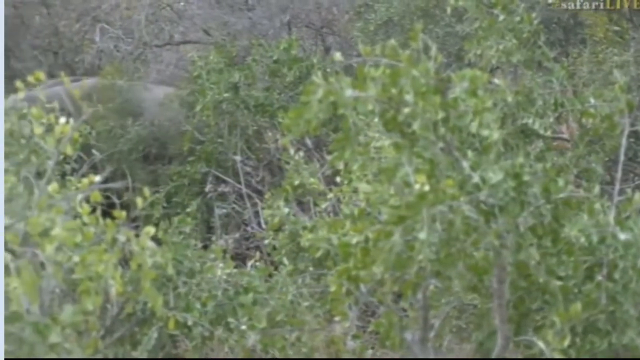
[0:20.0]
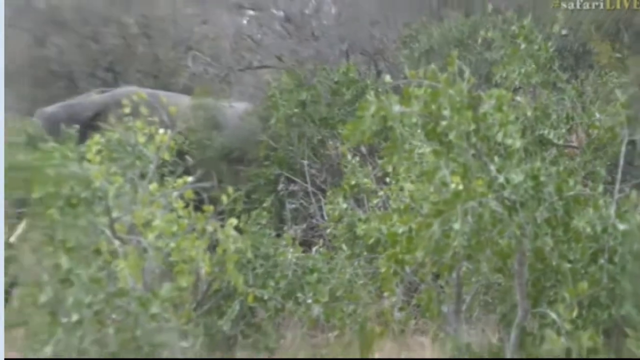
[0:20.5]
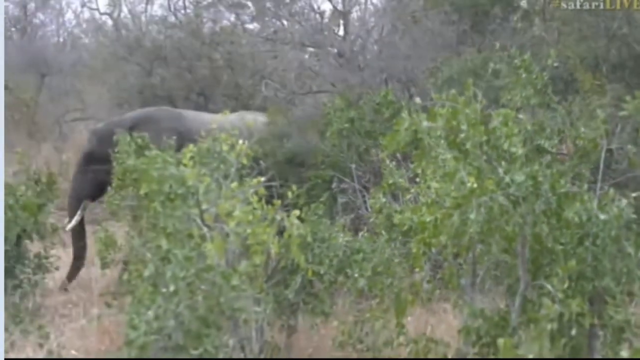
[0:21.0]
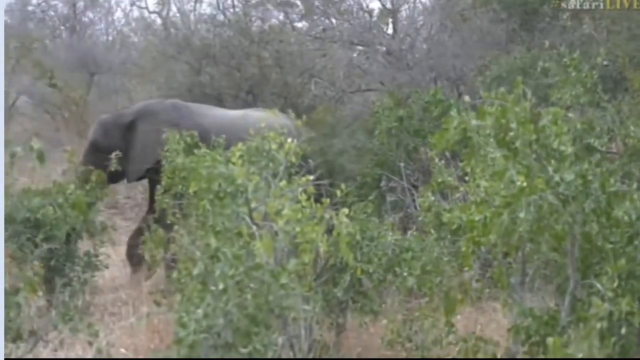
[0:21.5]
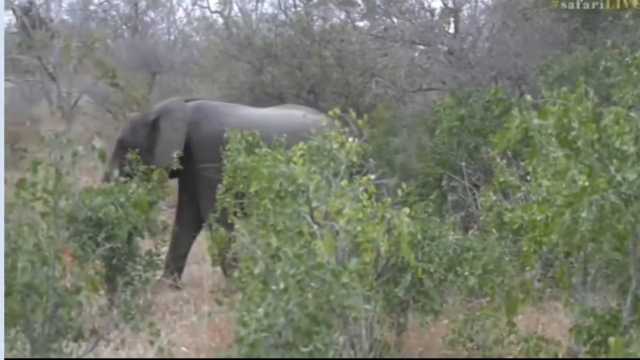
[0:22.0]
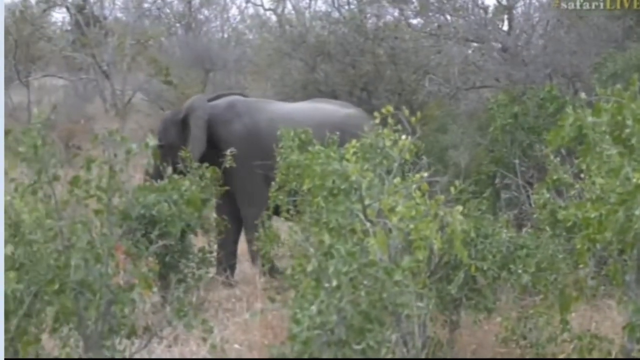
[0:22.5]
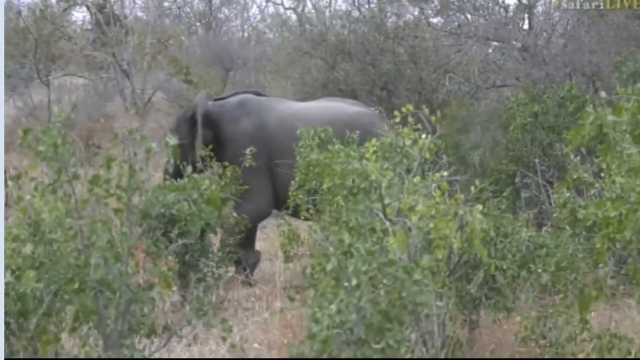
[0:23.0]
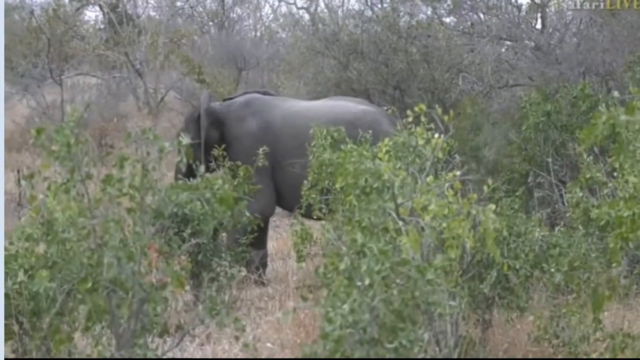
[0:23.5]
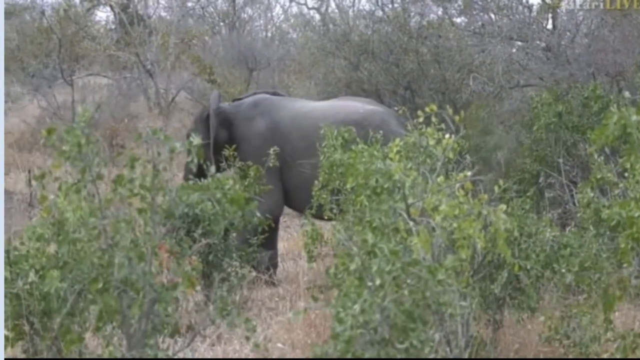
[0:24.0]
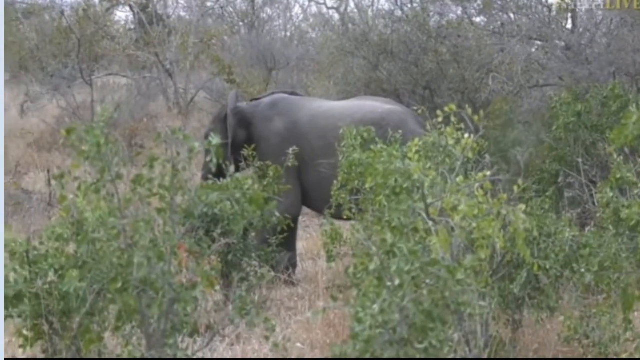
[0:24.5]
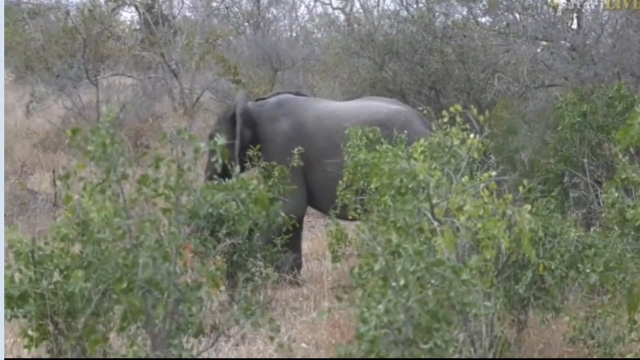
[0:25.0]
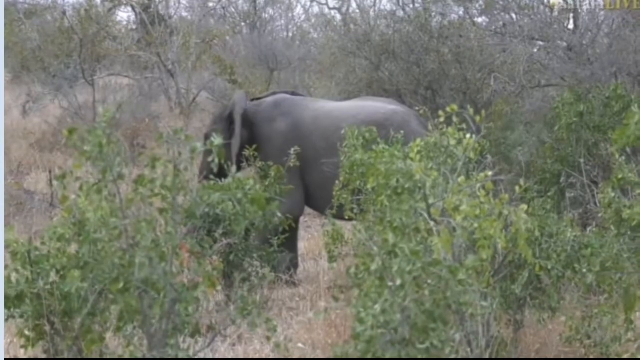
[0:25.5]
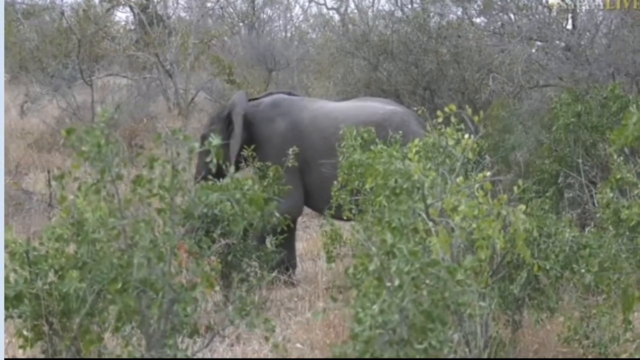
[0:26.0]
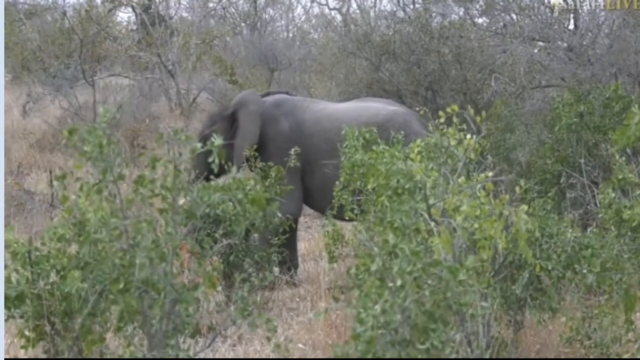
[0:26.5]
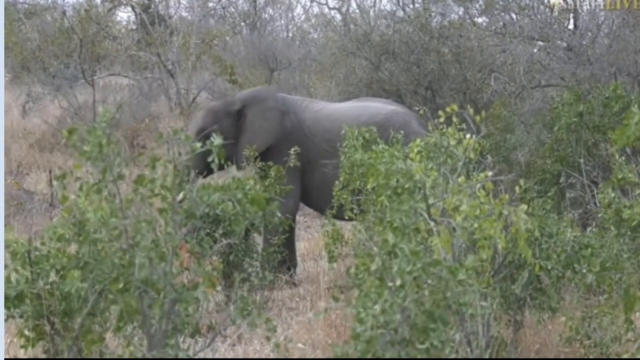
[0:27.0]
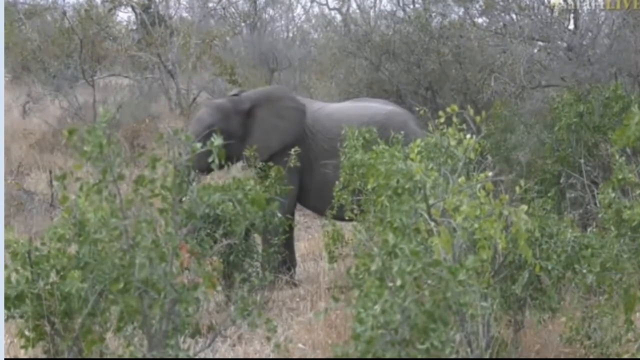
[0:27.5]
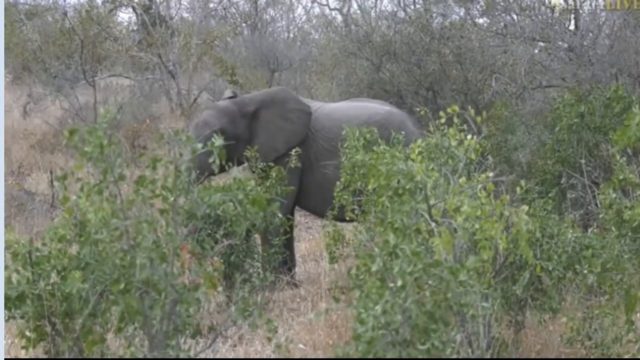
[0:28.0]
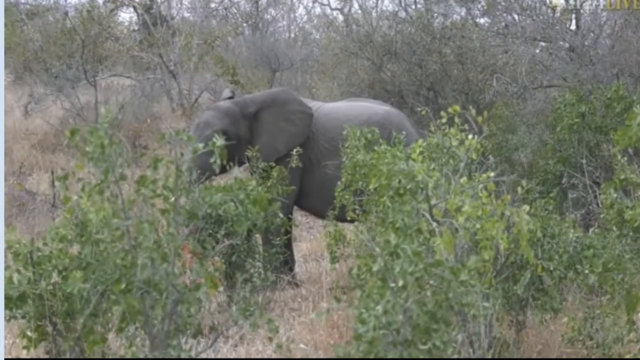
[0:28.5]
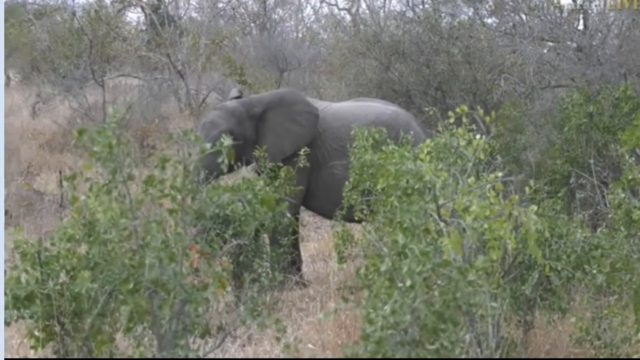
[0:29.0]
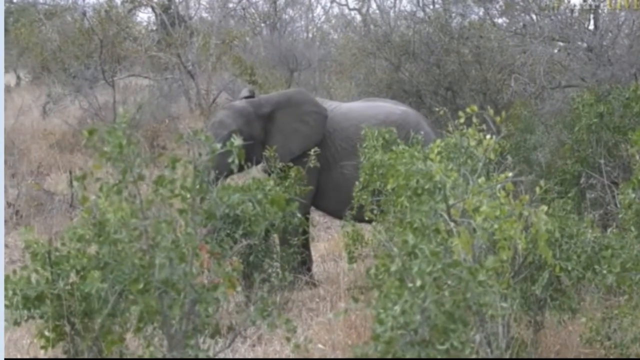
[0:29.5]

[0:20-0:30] A very big grey elephant appears behind the small green trees, with bushy, dry trees behind it. The elephant moves forward so that it is visible, then stands there, turning a little but not moving forward. It does not look like an old elephant. Behind it are a lot of dry trees, and it stays in place without moving back or forward.